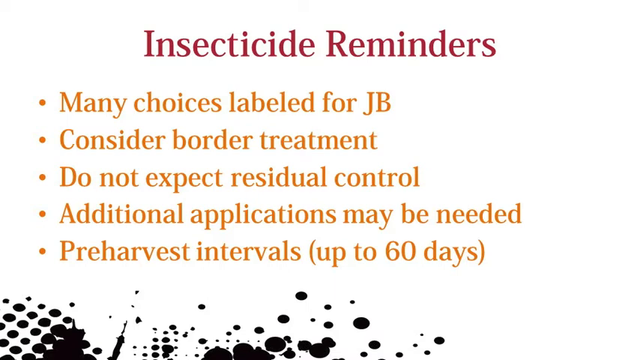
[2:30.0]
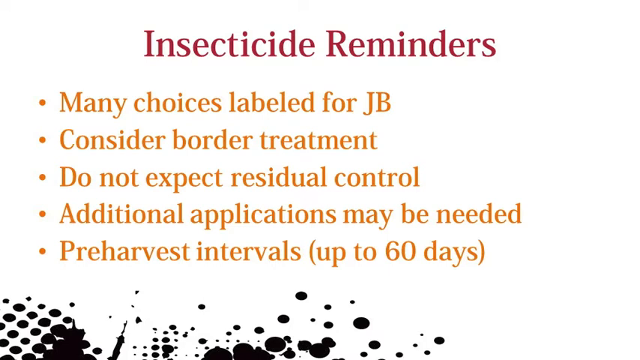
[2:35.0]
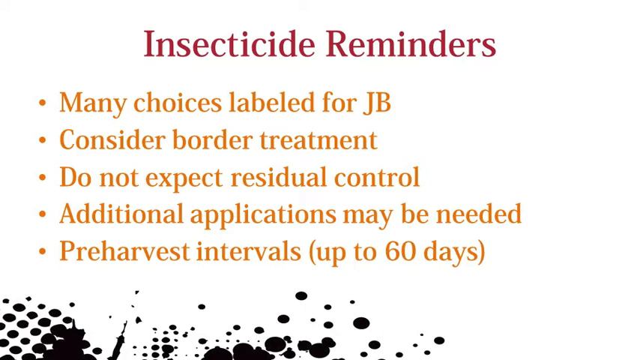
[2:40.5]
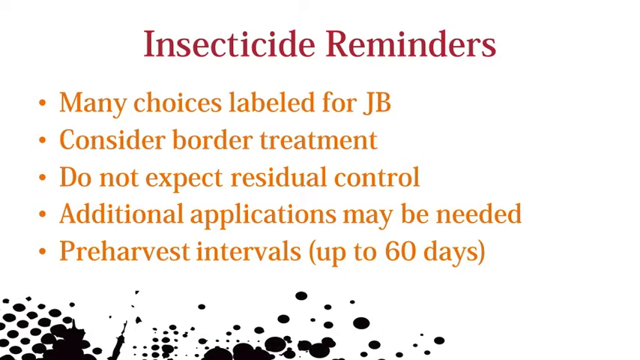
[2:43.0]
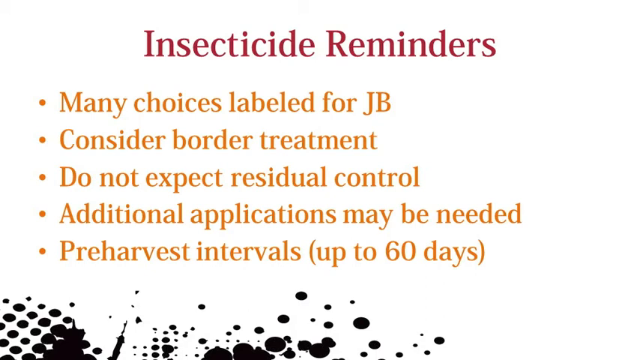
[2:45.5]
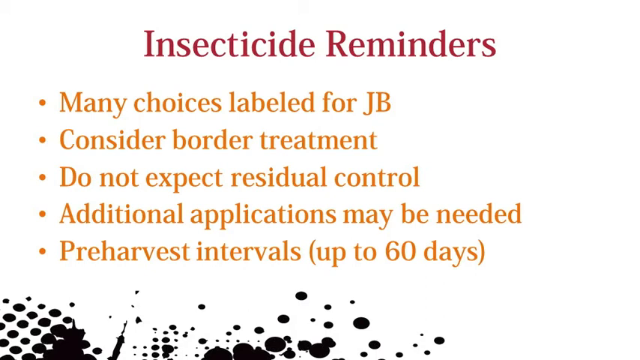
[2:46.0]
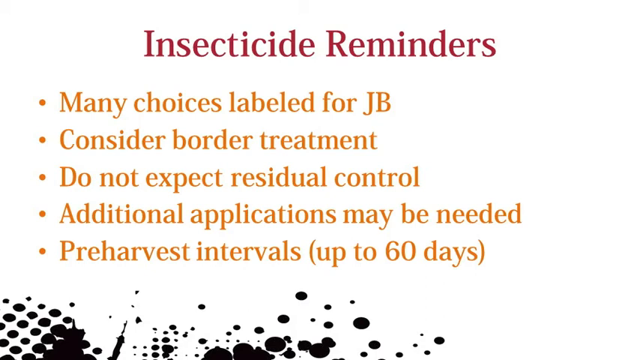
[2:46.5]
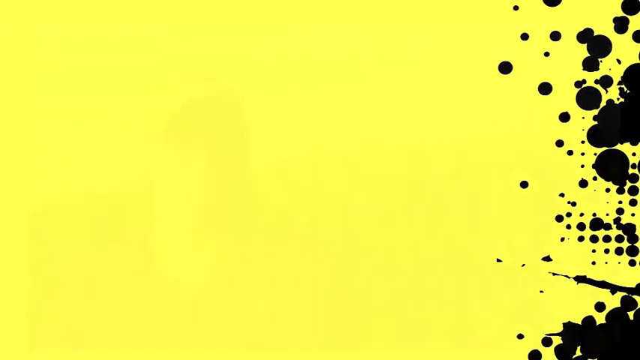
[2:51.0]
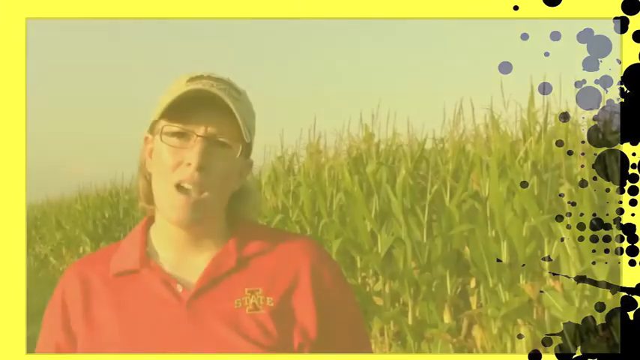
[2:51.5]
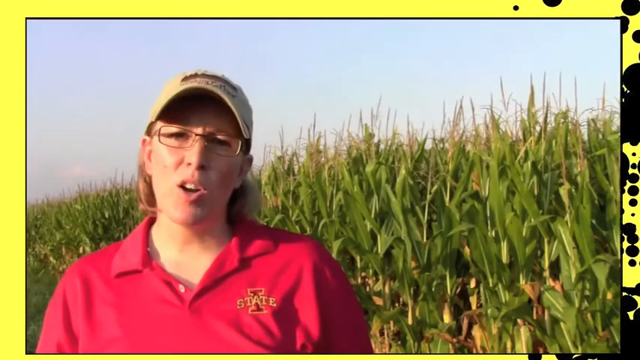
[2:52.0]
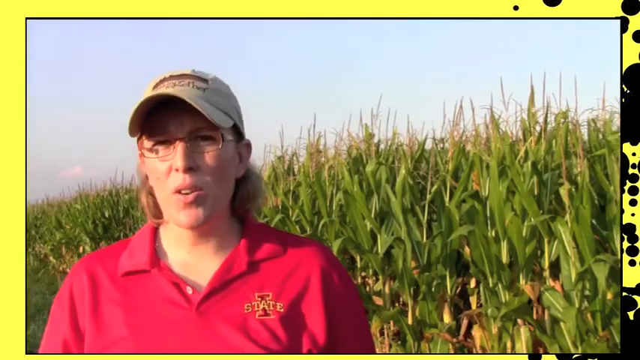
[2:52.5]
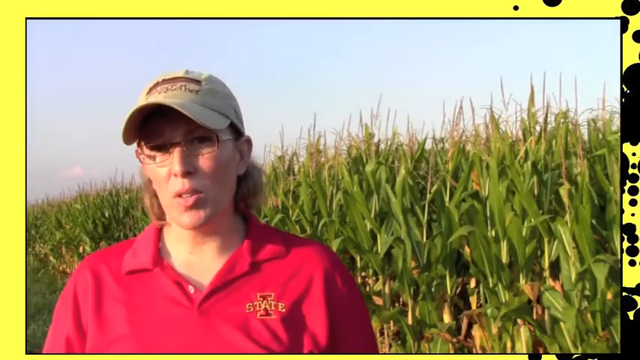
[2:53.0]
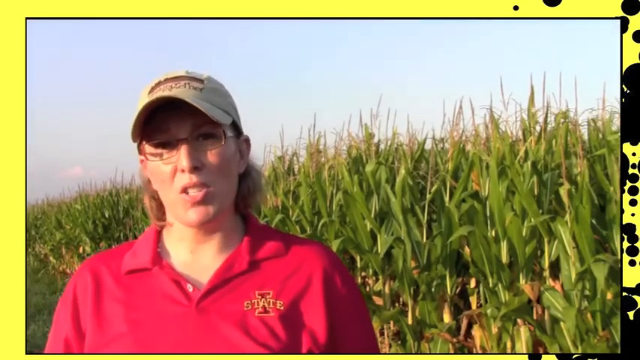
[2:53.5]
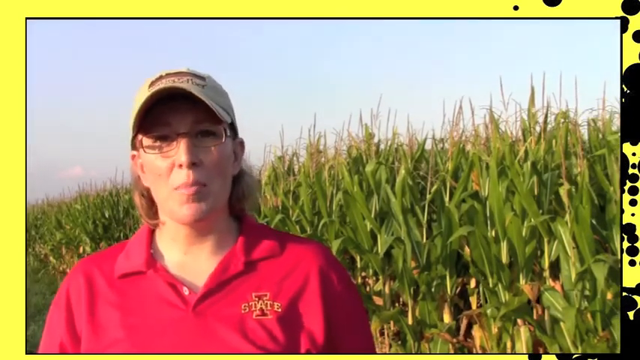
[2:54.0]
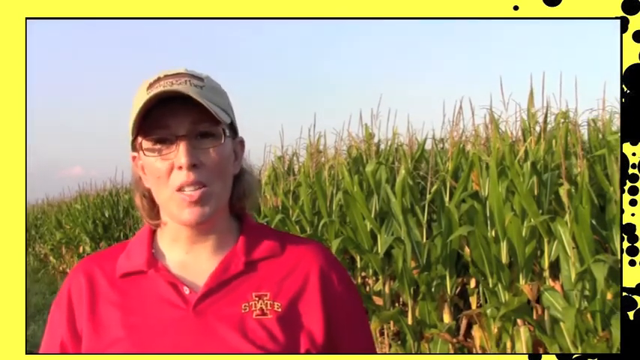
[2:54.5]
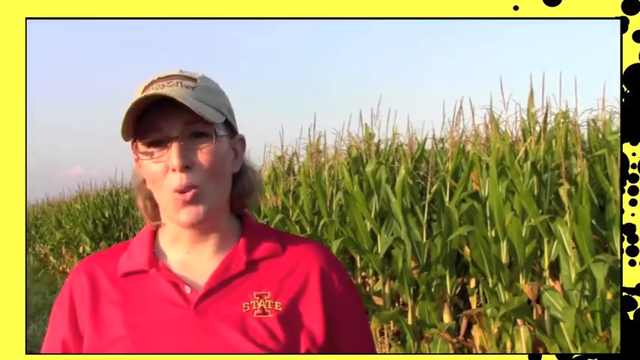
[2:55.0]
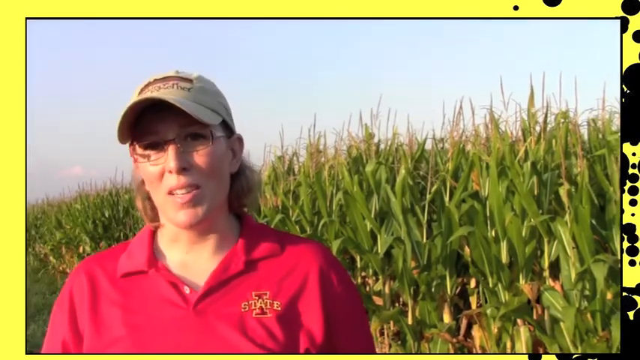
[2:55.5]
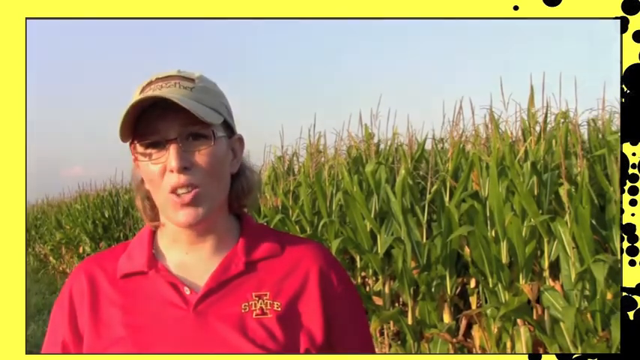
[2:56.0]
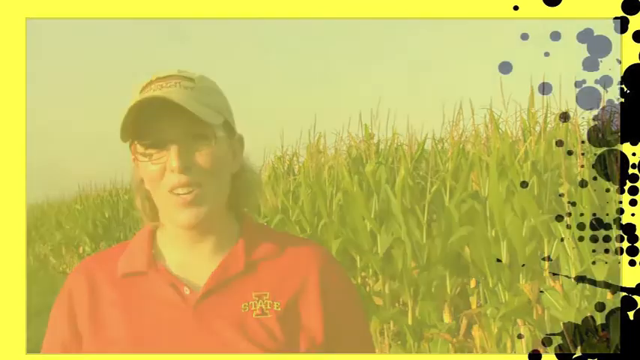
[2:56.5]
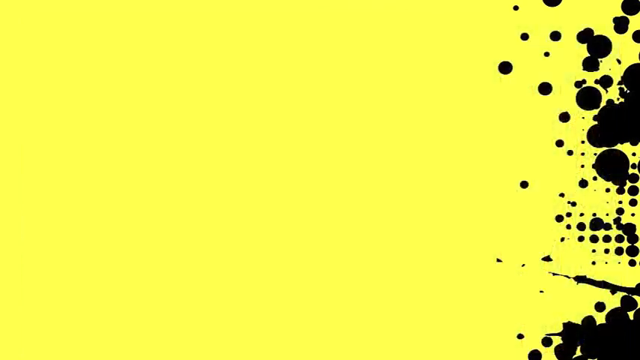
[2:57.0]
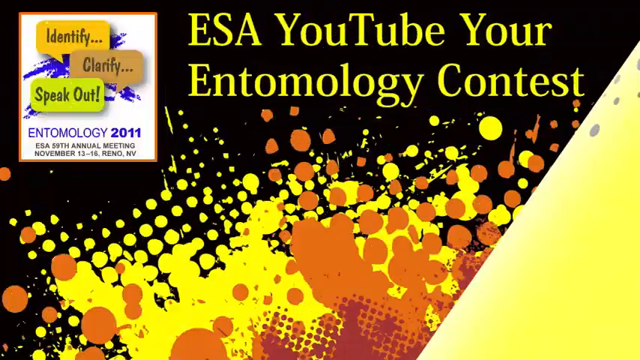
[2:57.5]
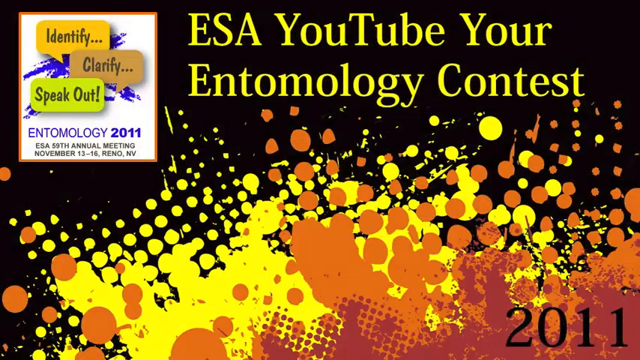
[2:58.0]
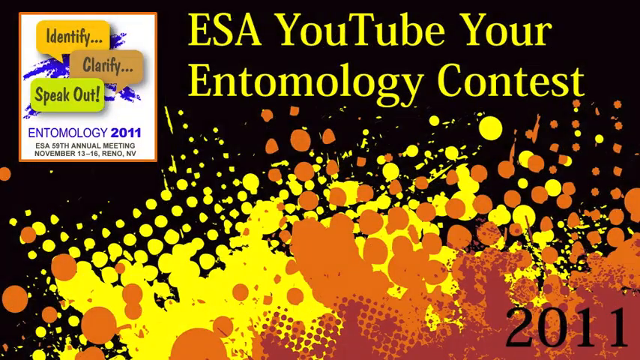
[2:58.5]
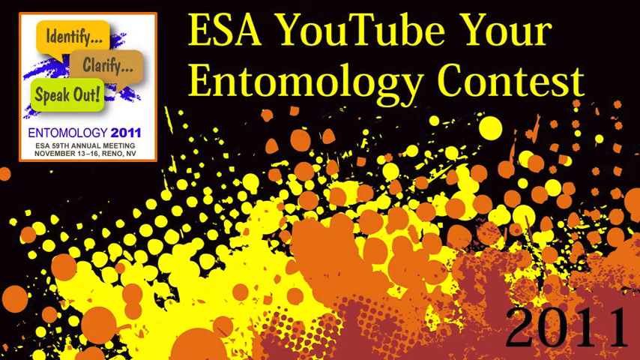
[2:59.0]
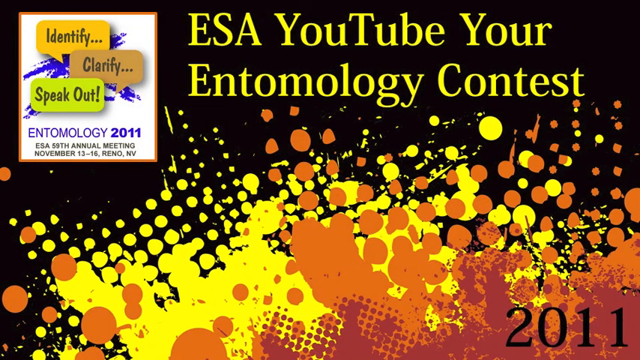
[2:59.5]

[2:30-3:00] A new page shows "Insecticide reminders" in red text at the top. Below are multiple bullet points written in orange: "many choices labeled for JB," "consider border treatment," "do not expect residual control," "additional applications may be needed," and "pre-harvest intervals up to 60 days." The text is on a white background, with black spots at the bottom. The video stays on this page for some time, then cuts back to the woman from the beginning, wearing a red polo with "Iowa State" written on the left breast pocket area, a hat, and glasses. She looks at the camera and talks to it, with a cornfield behind her. The sun is out and shining on her skin as she talks.